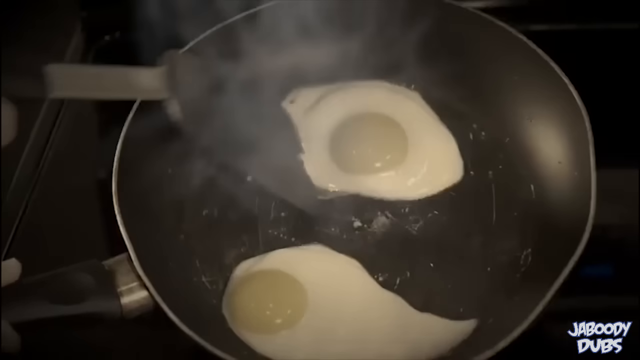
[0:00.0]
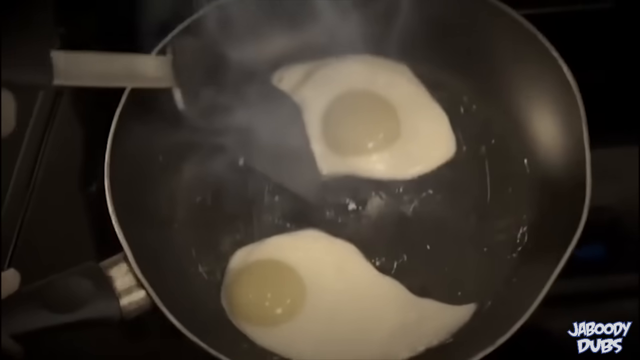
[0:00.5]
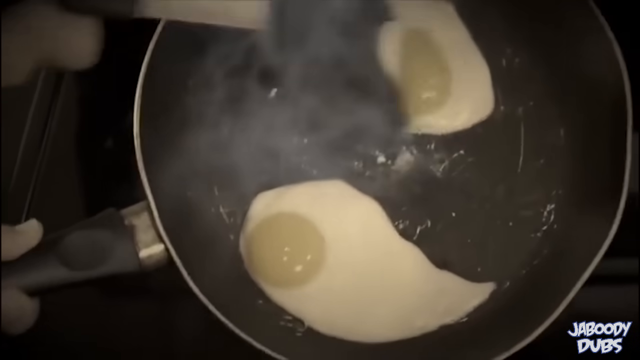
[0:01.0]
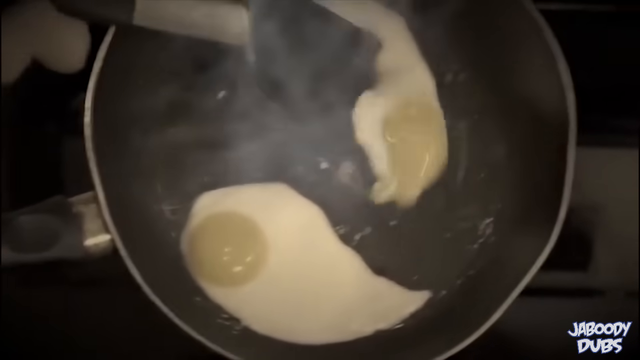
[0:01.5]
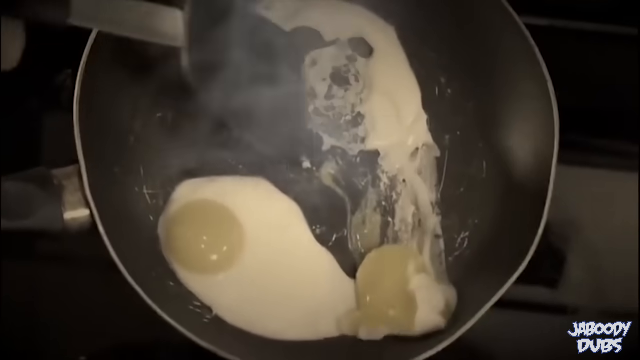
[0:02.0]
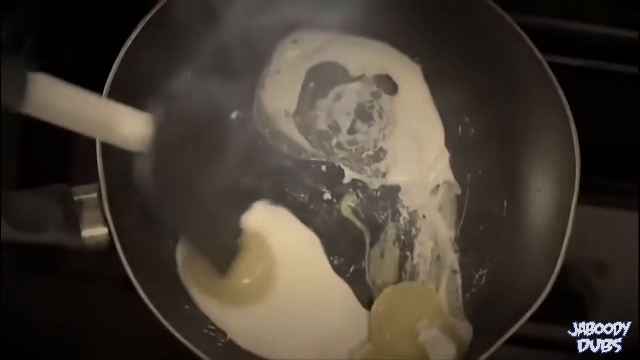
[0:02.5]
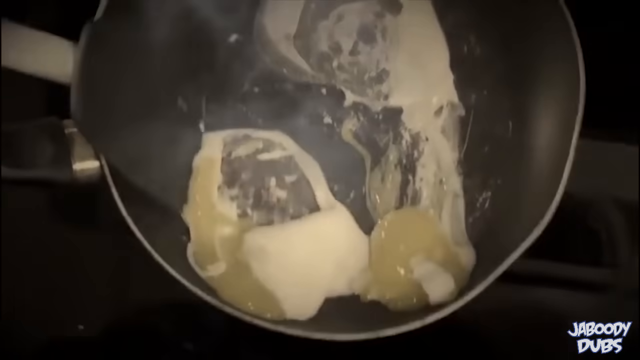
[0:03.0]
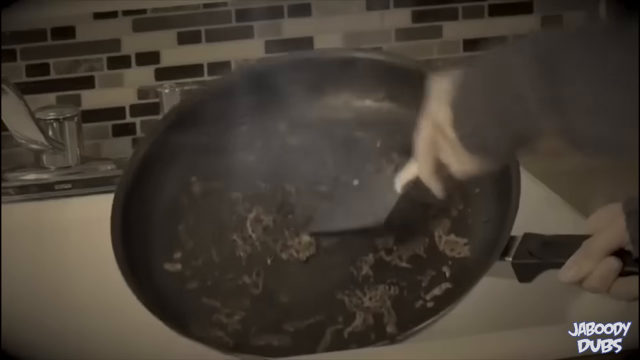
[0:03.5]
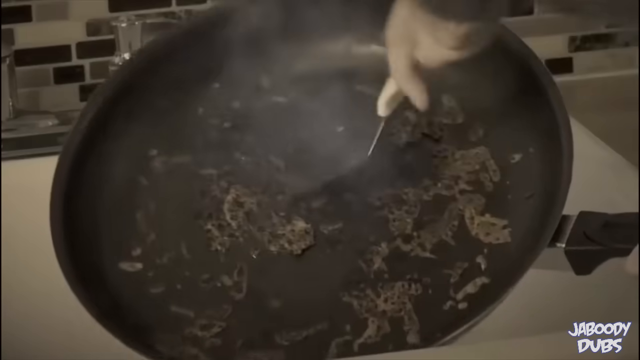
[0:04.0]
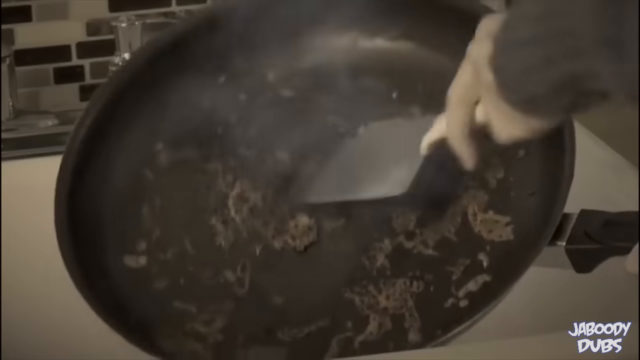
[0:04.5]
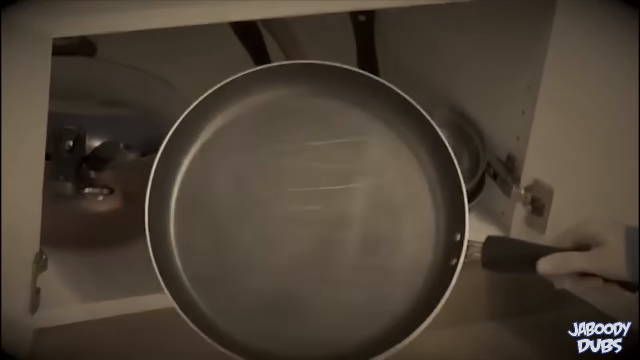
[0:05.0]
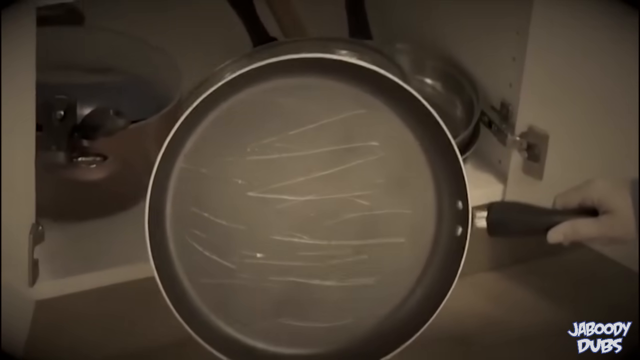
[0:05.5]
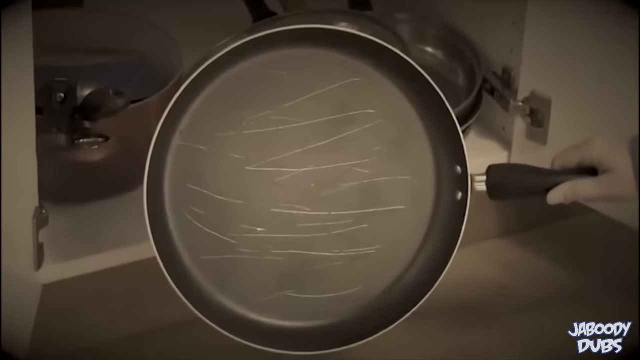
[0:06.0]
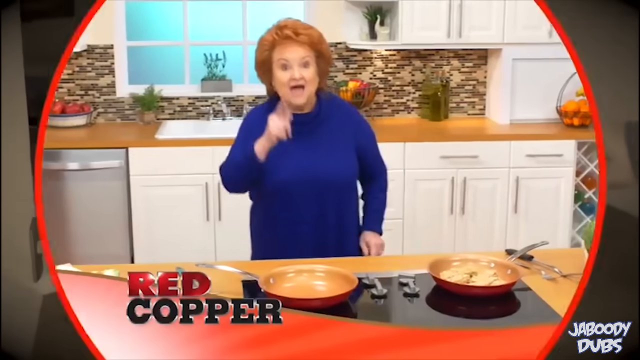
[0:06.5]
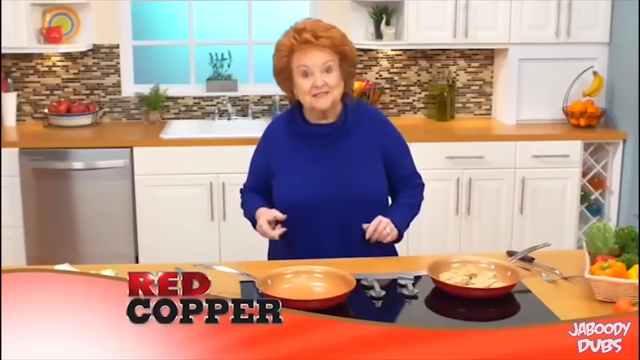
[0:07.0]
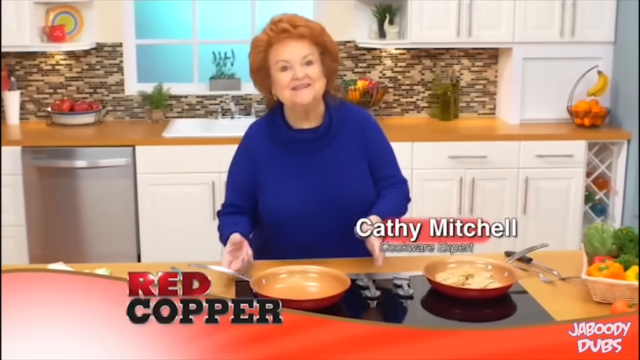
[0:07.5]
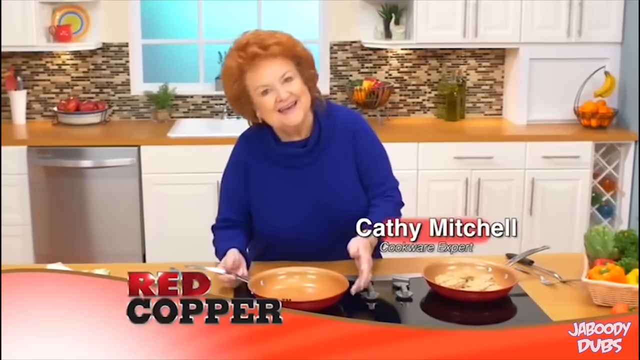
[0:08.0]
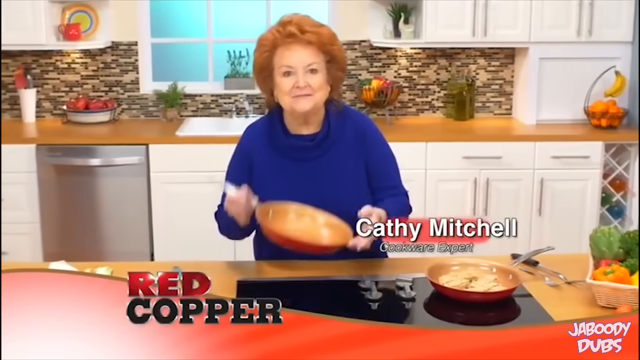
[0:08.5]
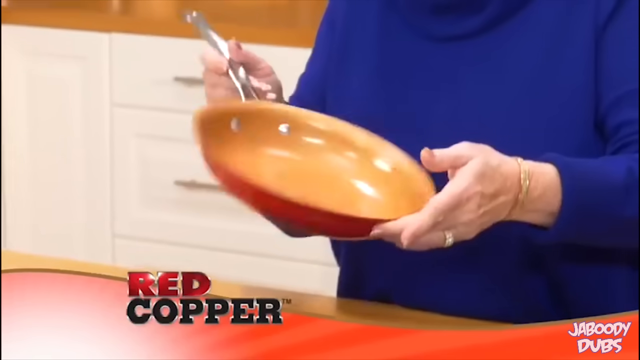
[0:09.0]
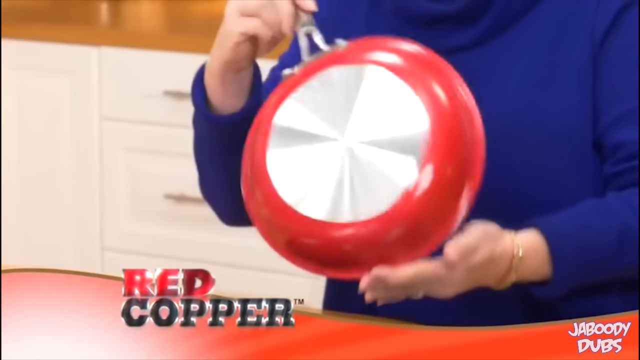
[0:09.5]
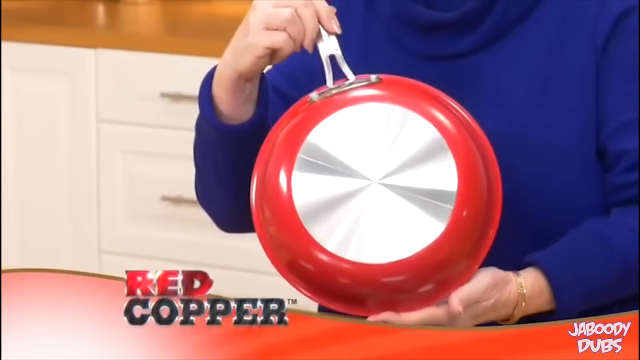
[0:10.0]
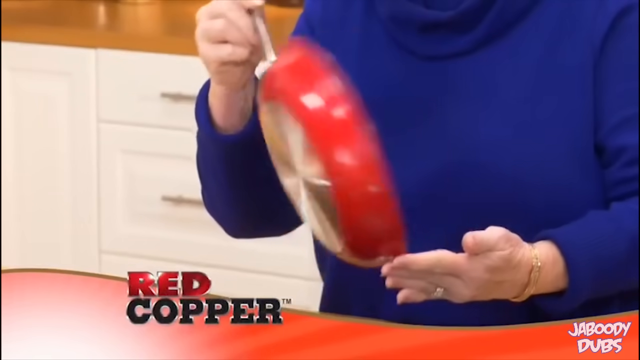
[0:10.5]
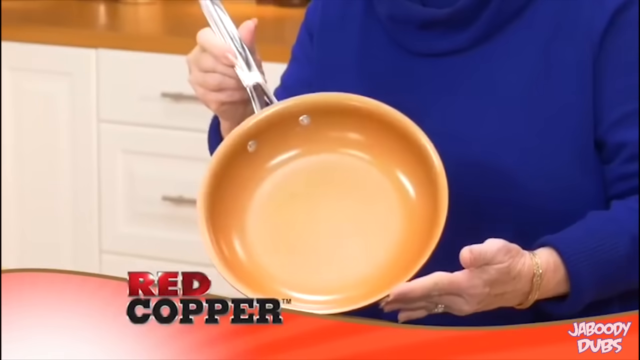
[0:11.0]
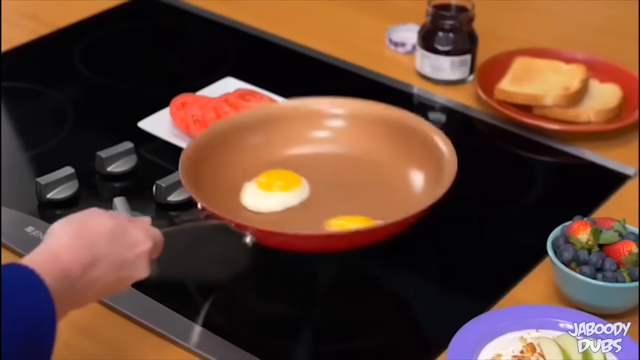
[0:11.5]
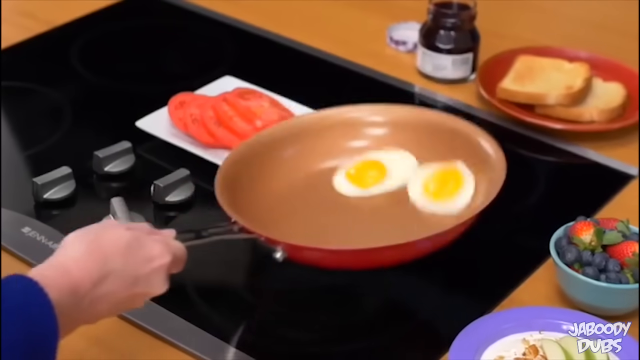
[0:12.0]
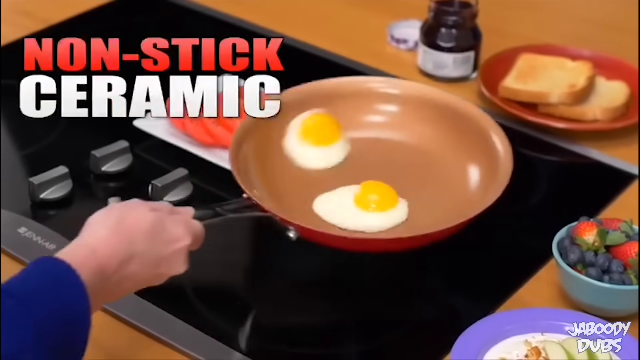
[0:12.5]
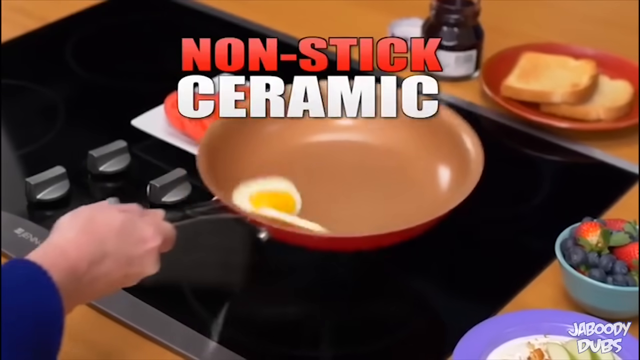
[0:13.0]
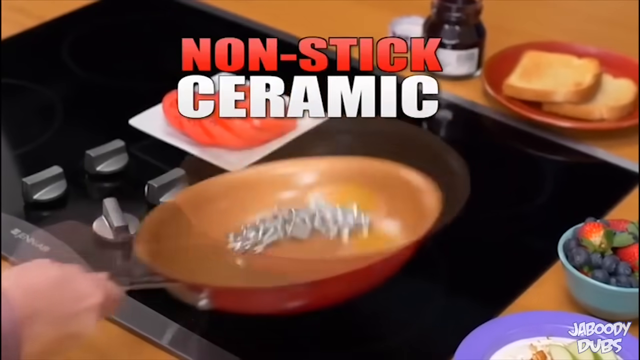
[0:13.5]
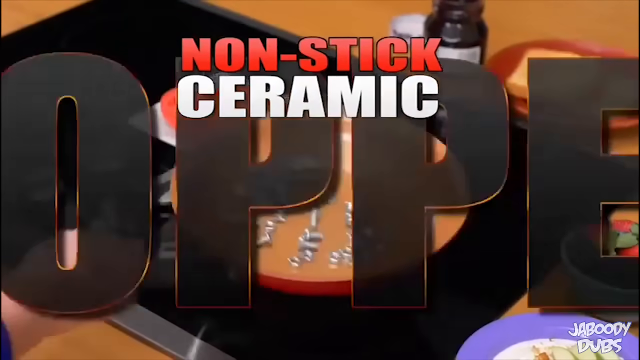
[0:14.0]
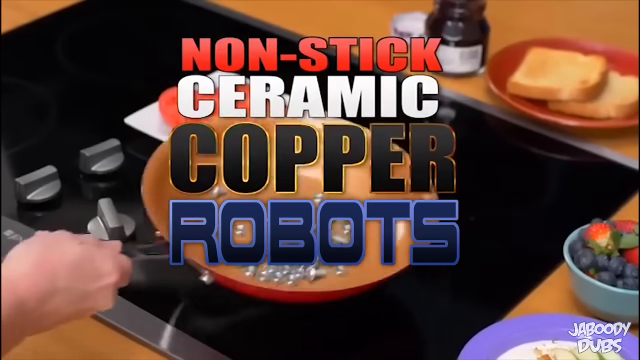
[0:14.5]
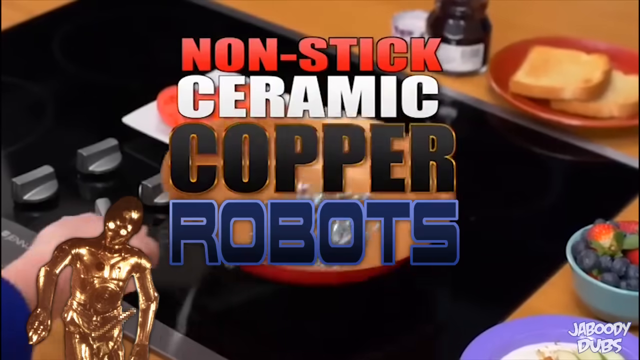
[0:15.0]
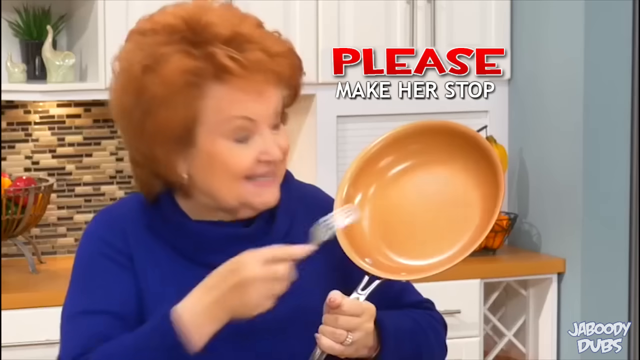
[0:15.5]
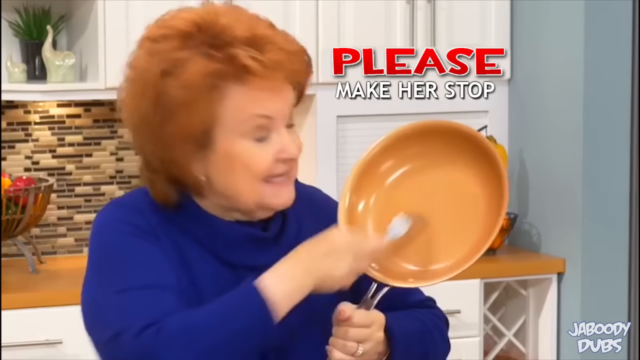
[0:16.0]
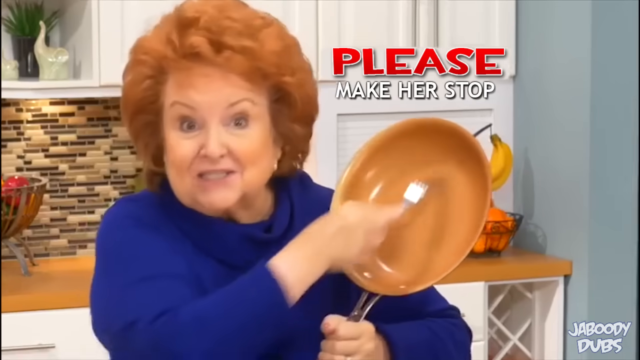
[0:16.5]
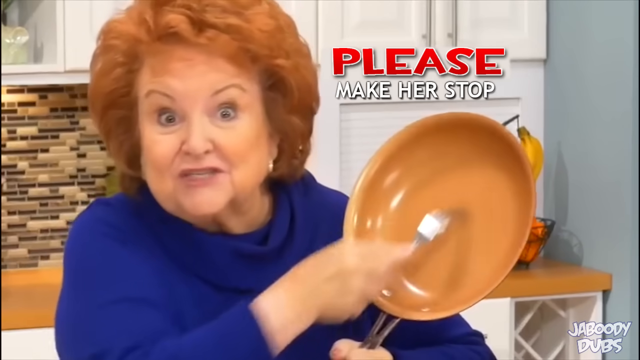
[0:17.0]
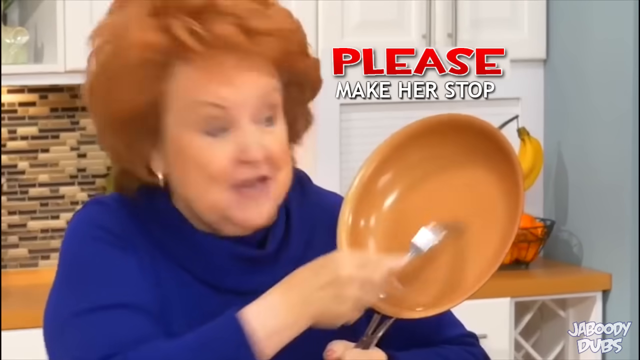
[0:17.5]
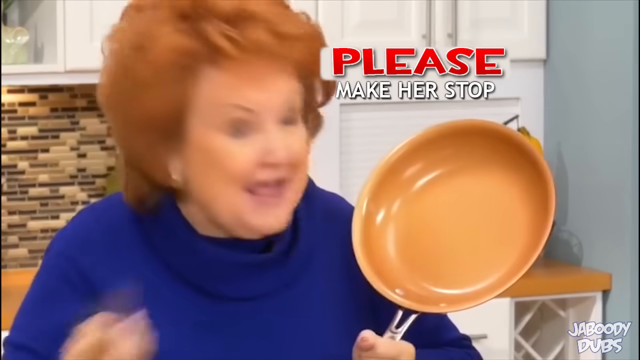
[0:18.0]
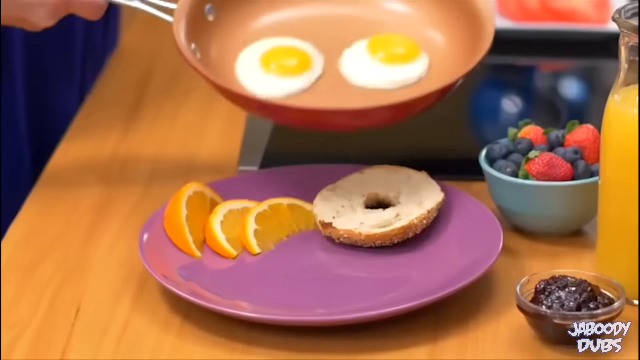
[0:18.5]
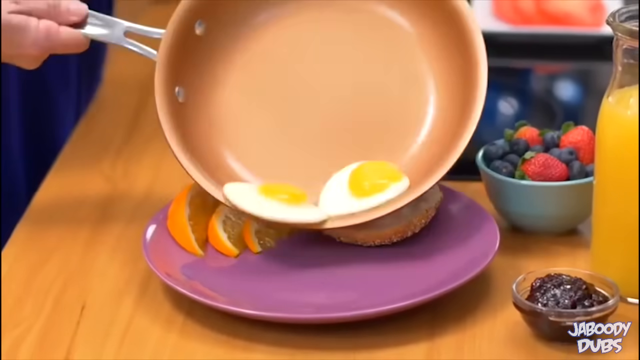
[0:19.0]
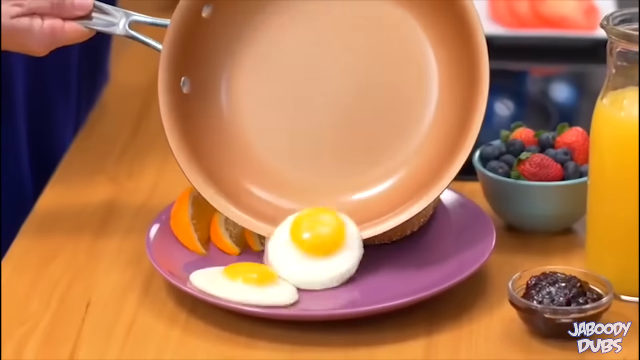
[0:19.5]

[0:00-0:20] A skillet holds two eggs, and someone grabs a spatula, trying to take the eggs out. The video cuts to a woman with red hair wearing a blue sweater, who grabs a copper skillet, puts eggs in it and swirls them around, apparently to show that the eggs are not sticking. It cuts back to images of people having trouble with skillets, with food getting stuck when they cook eggs; those skillets seem to be Teflon skillets. Back with the woman in the blue sweater, the eggs are shown not sticking to the skillet. She apparently also grabs a fork and tries to scratch the skillet, but there are no scratches on it. She also has a skillet on top of an electric stove, and there appears to be a fruit bowl with berries. The counter looks orange, and the woman holds the copper skillet.